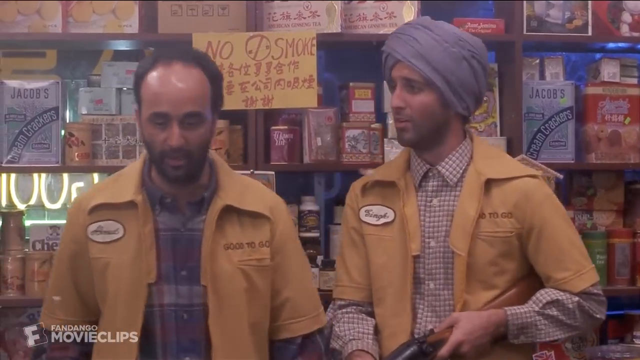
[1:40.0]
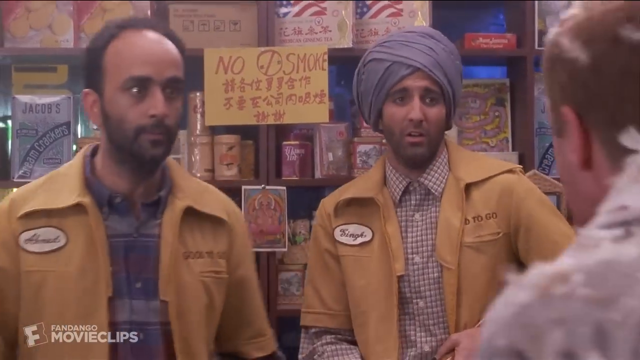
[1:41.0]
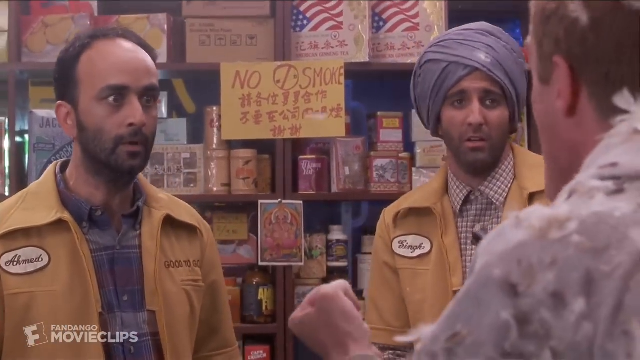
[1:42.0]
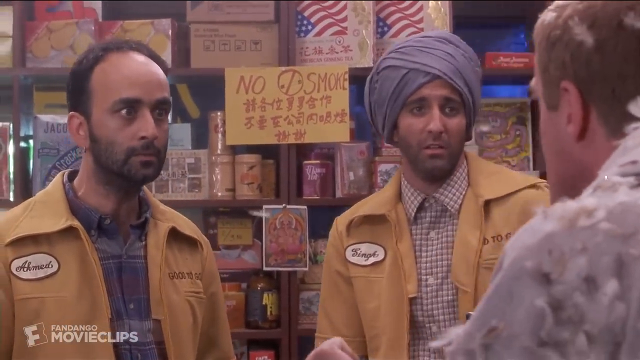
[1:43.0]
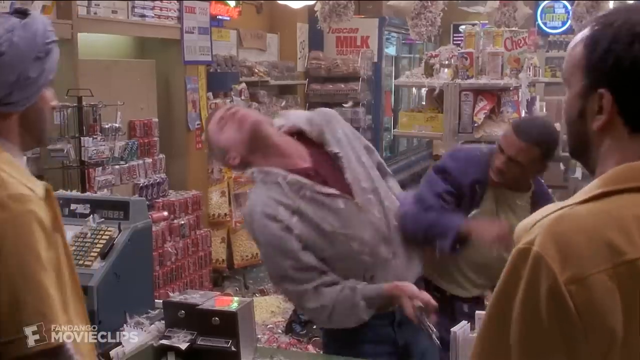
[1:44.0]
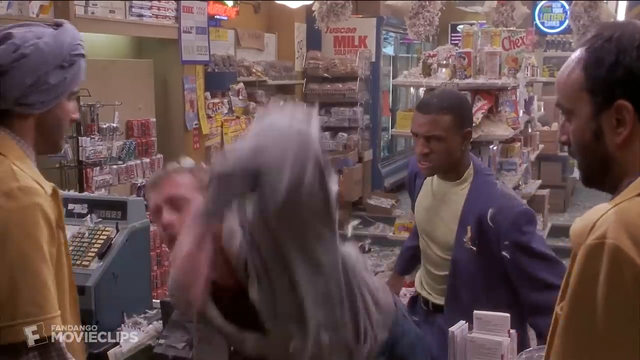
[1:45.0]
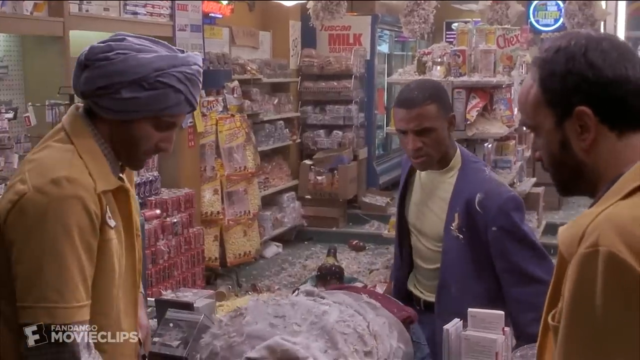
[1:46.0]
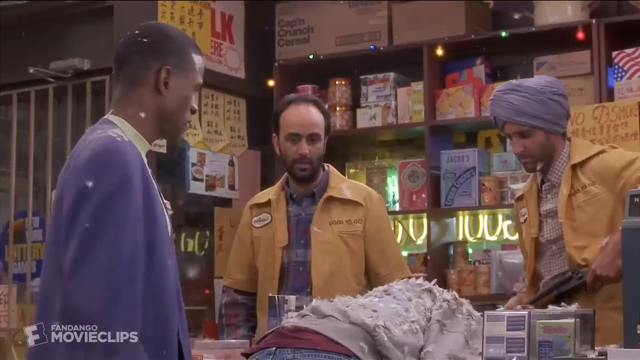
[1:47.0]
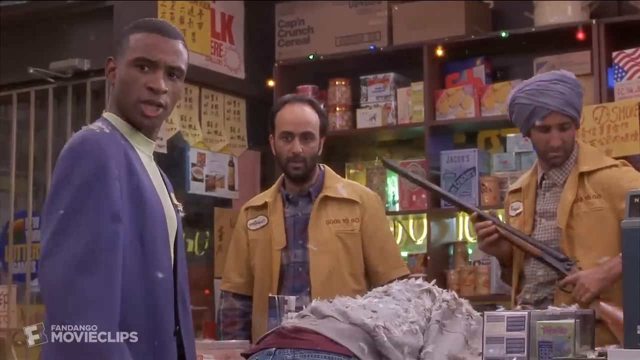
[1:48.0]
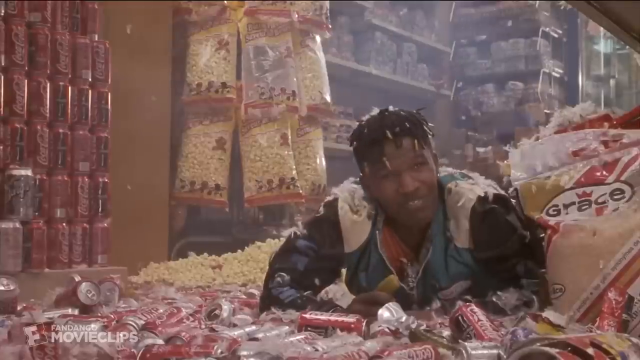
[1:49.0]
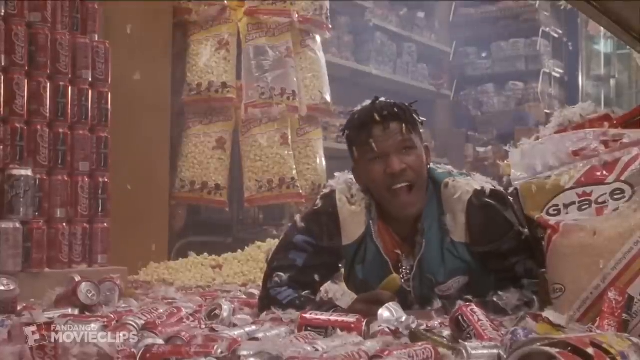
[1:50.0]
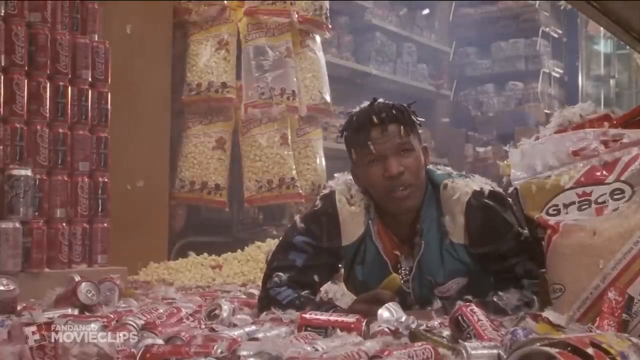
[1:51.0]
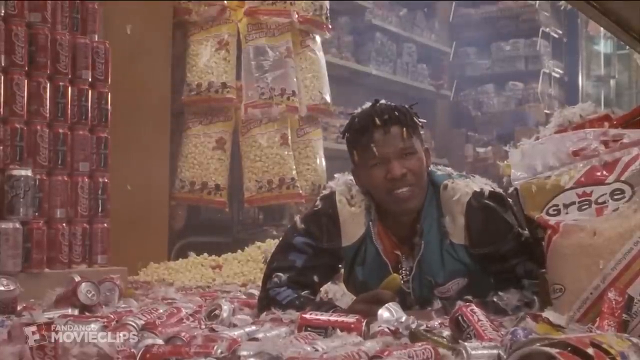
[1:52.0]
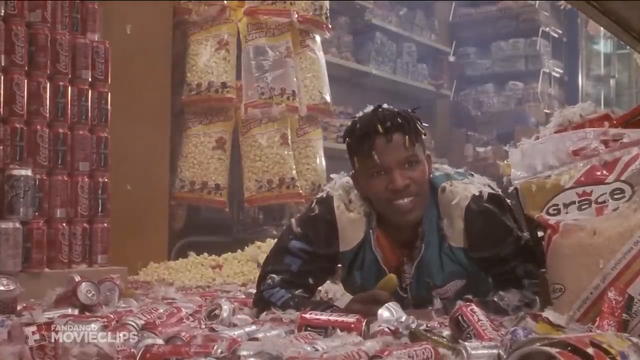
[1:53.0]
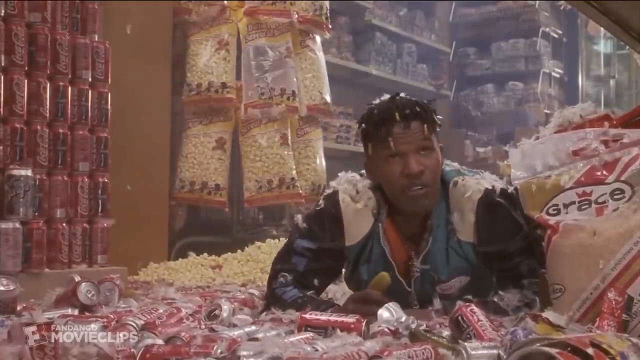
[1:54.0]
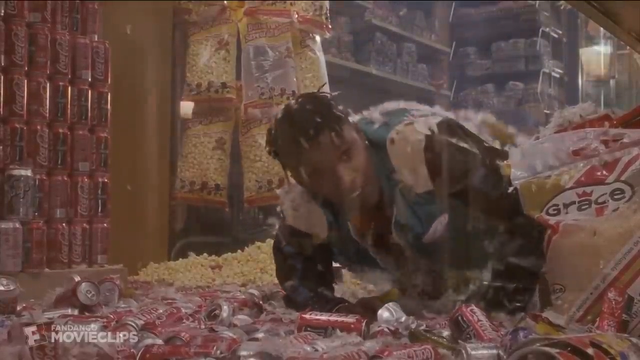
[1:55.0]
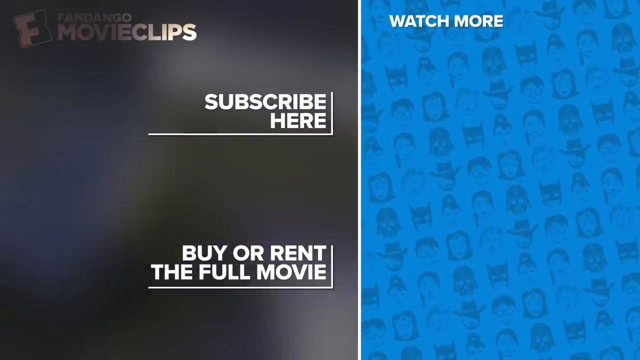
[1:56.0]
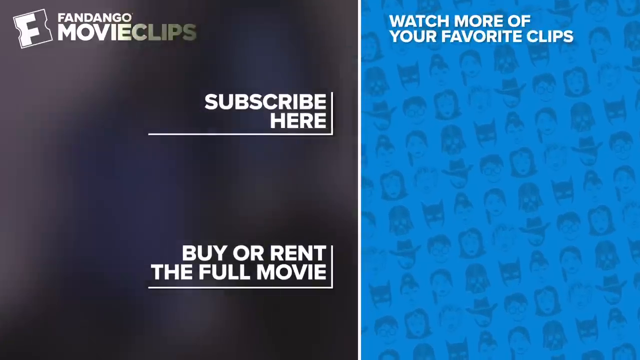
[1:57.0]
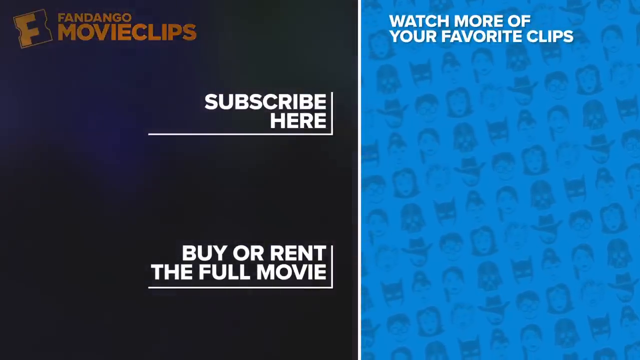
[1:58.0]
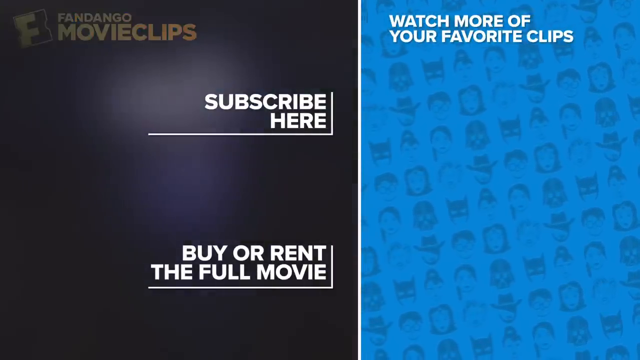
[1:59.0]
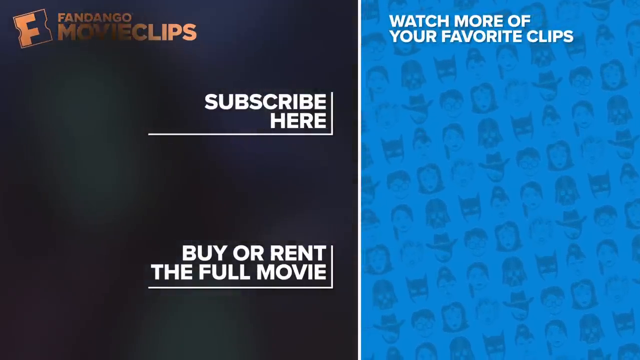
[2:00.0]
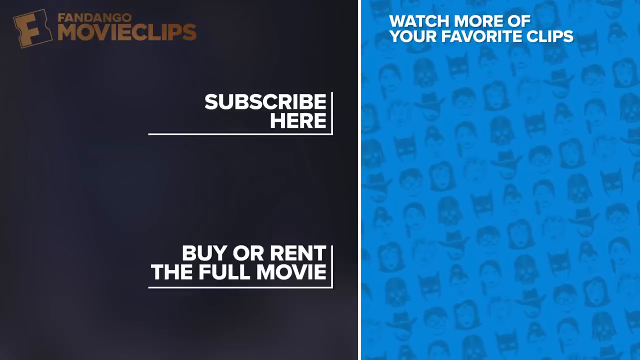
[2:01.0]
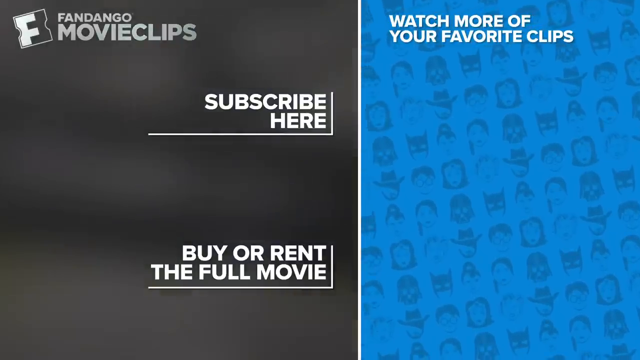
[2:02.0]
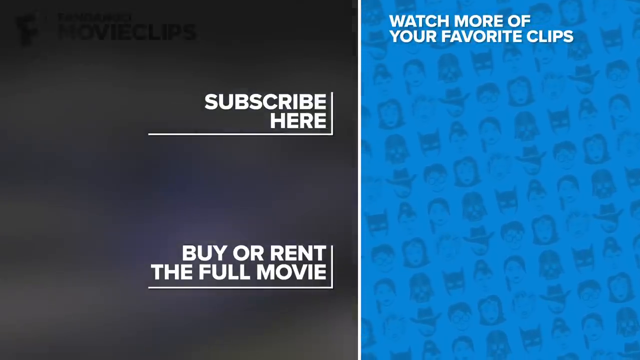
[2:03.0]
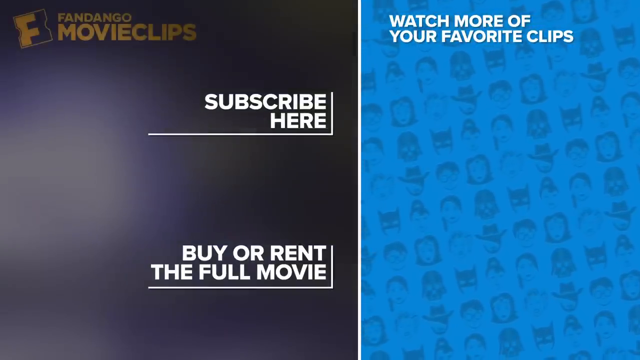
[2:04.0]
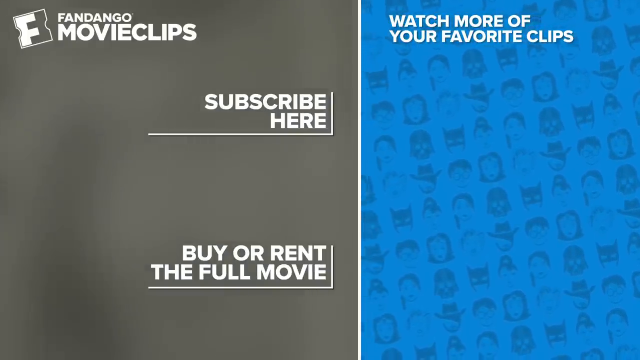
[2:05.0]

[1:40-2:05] The owners talk to each other and look scared of what they have done and of the mess they have created. A man who had been trying to help stands up; the man gets up and tries to point a gun at them, and one of the black men, who is behind, punches this would-be thief. Text then appears telling viewers to subscribe, buy or rent the full movie, and watch more of their favorite clips.